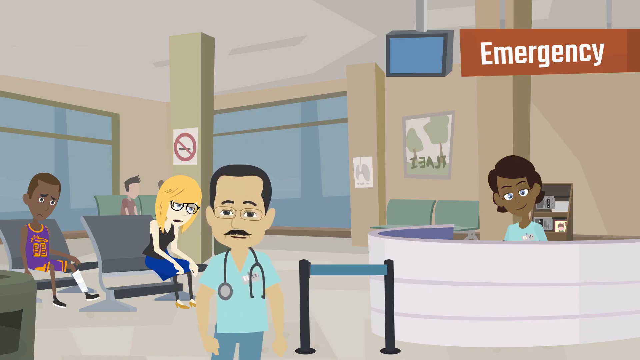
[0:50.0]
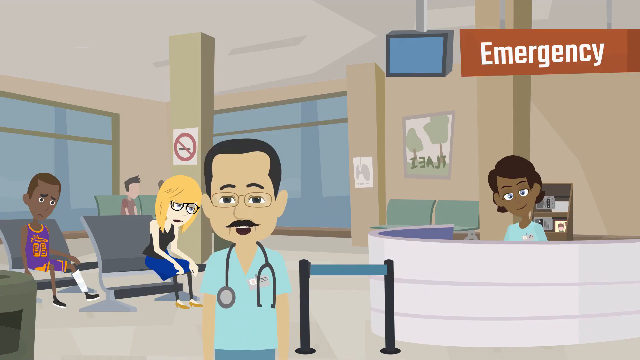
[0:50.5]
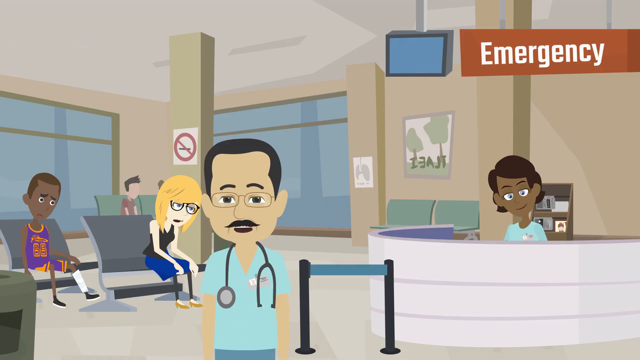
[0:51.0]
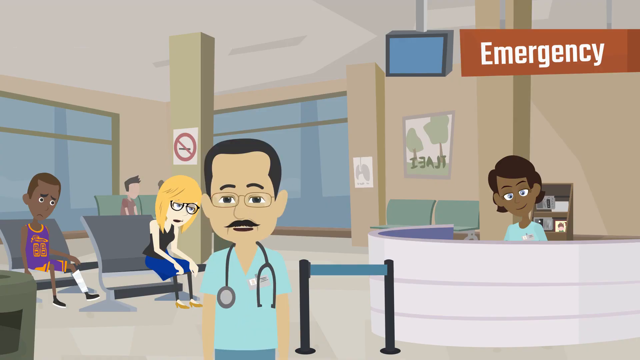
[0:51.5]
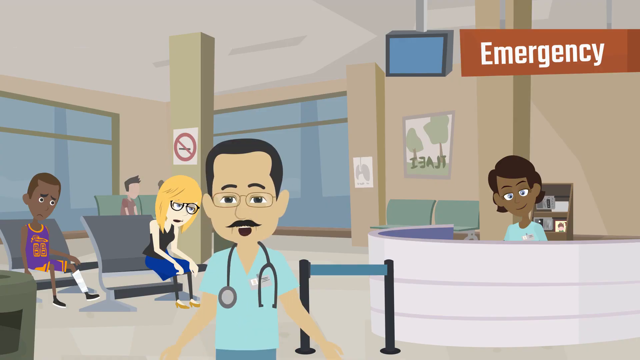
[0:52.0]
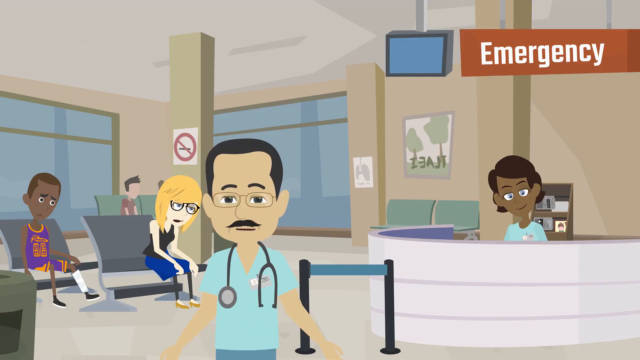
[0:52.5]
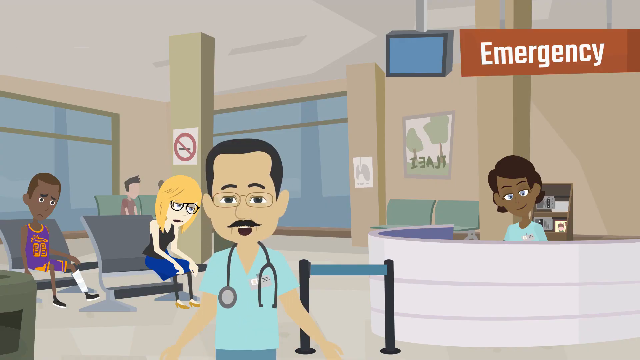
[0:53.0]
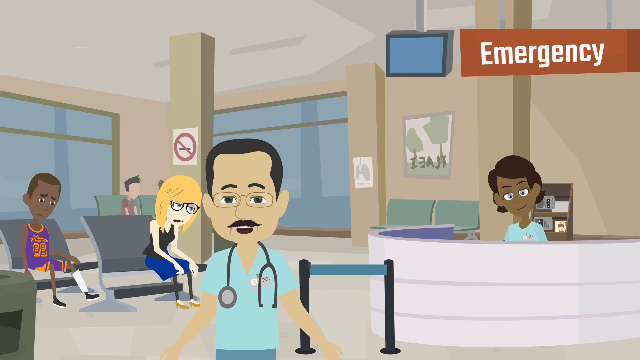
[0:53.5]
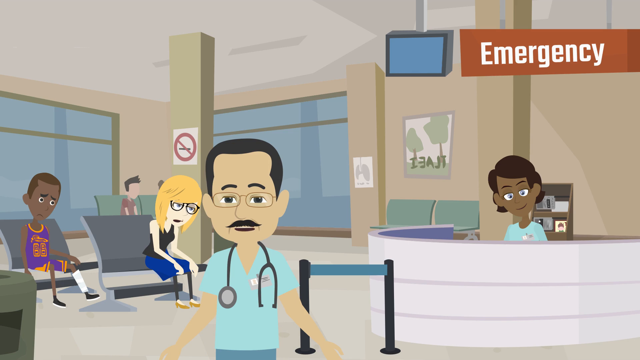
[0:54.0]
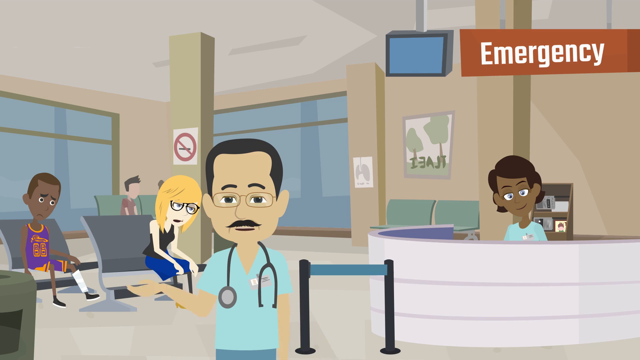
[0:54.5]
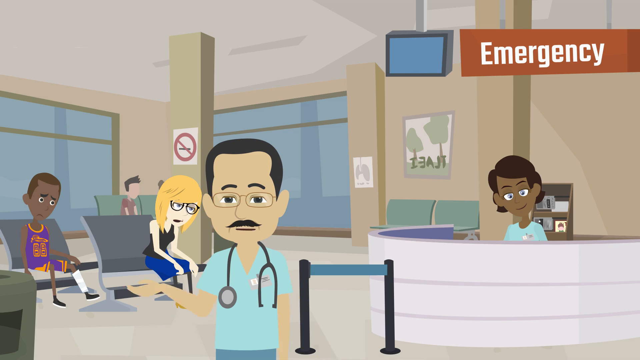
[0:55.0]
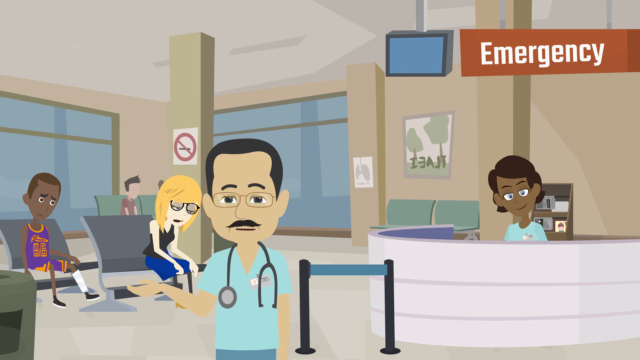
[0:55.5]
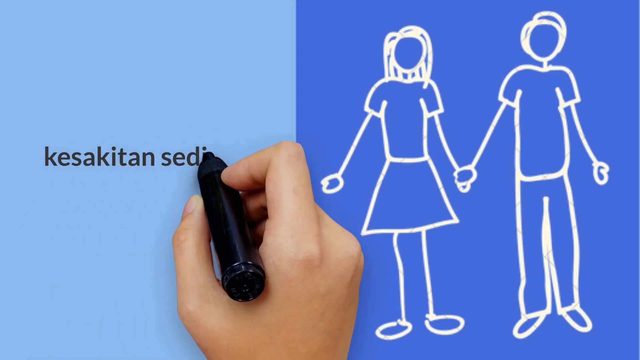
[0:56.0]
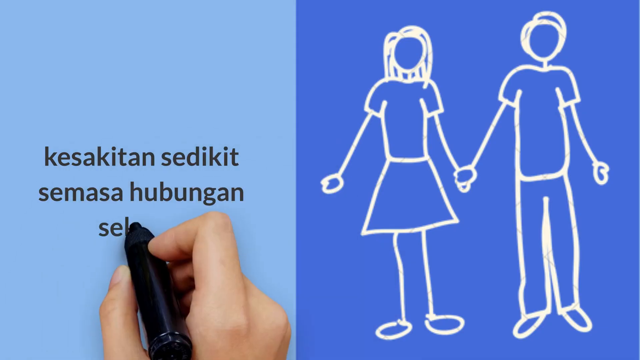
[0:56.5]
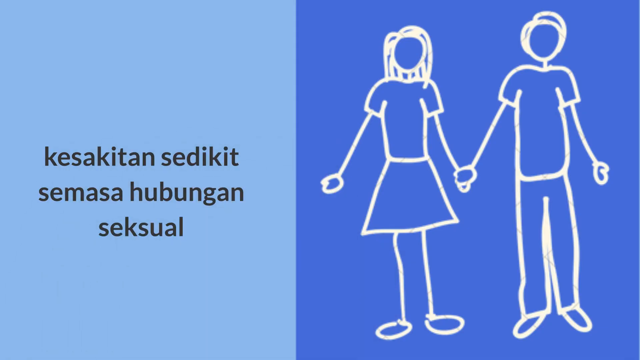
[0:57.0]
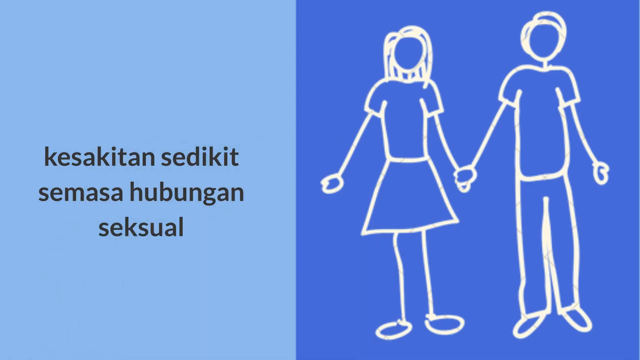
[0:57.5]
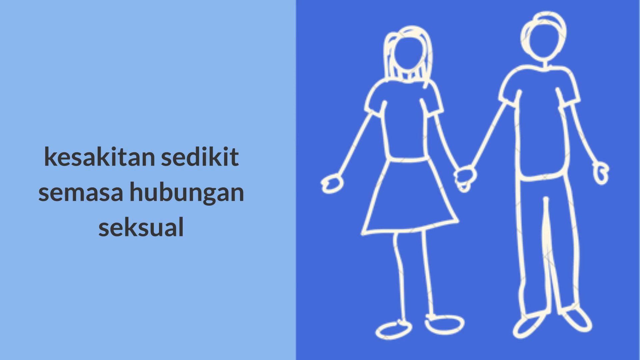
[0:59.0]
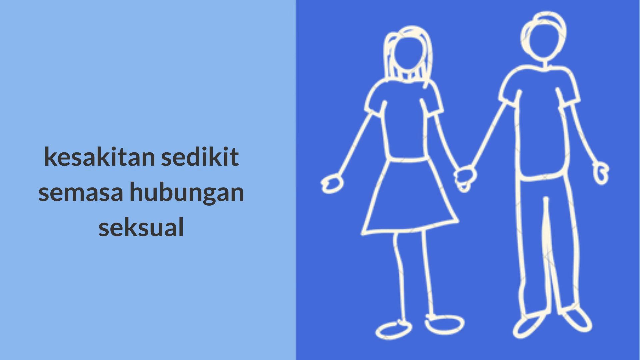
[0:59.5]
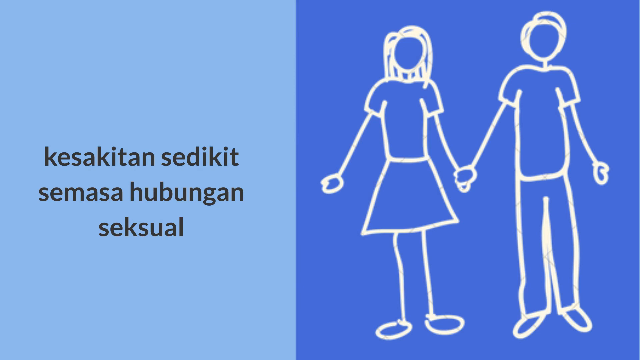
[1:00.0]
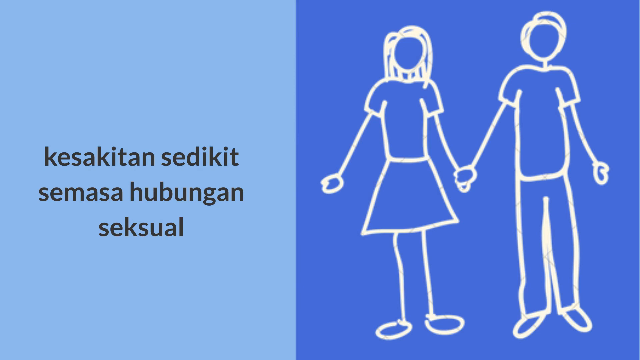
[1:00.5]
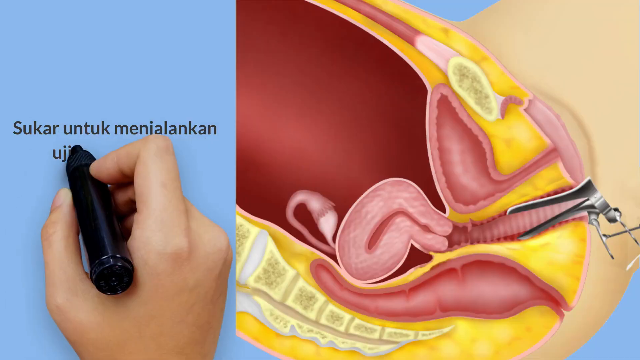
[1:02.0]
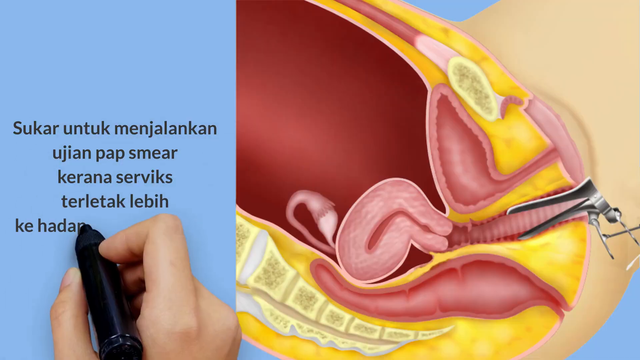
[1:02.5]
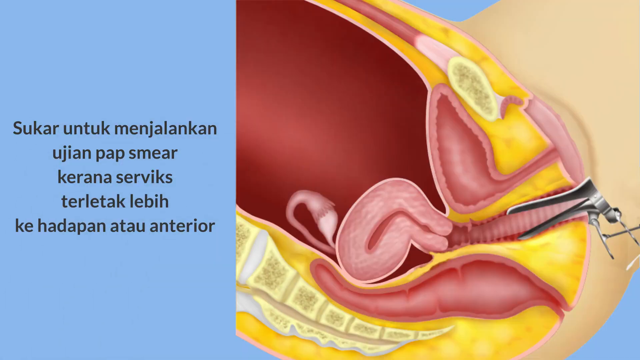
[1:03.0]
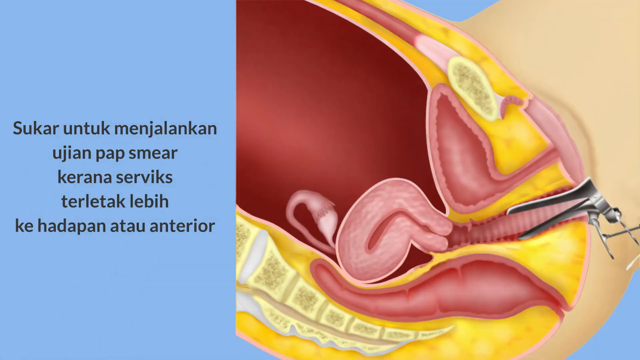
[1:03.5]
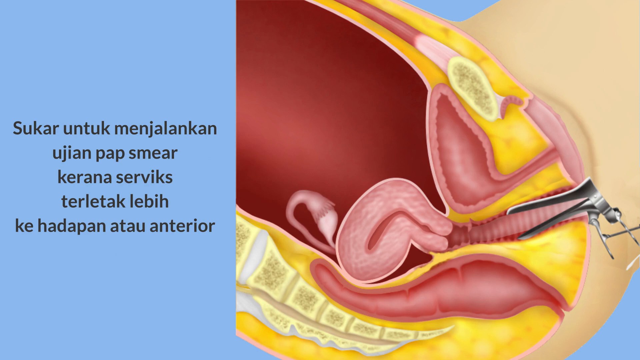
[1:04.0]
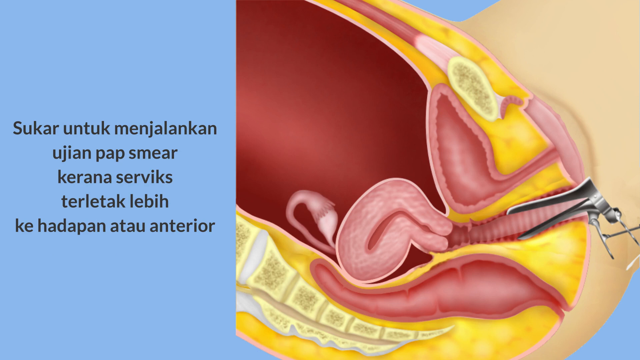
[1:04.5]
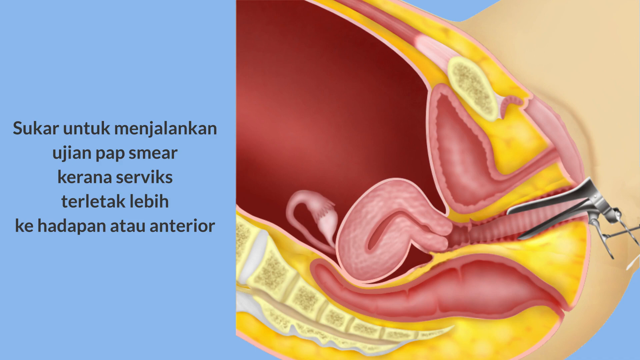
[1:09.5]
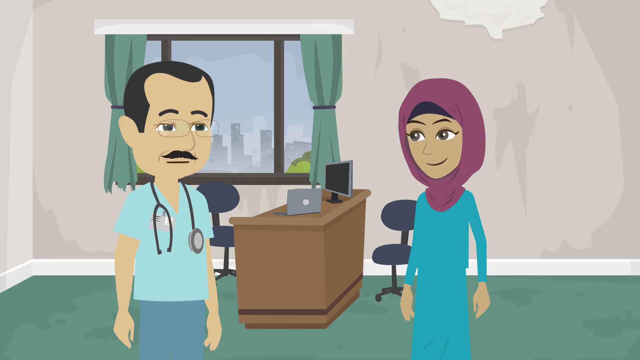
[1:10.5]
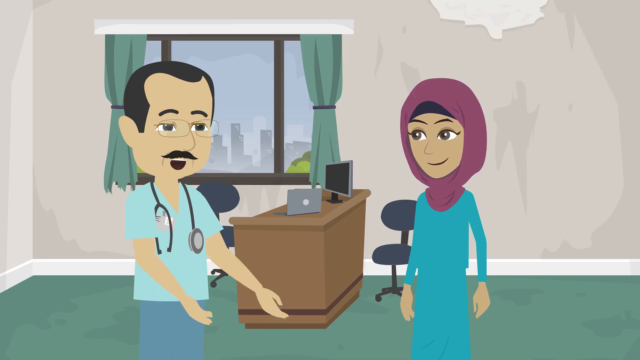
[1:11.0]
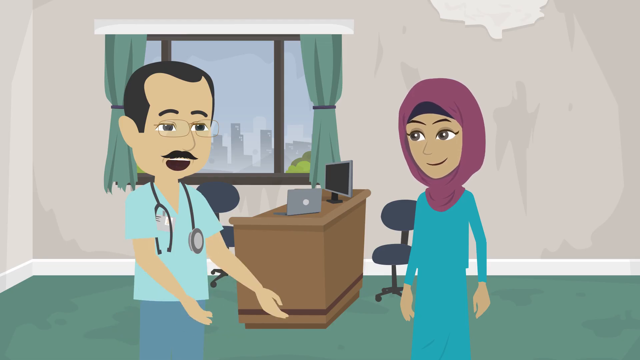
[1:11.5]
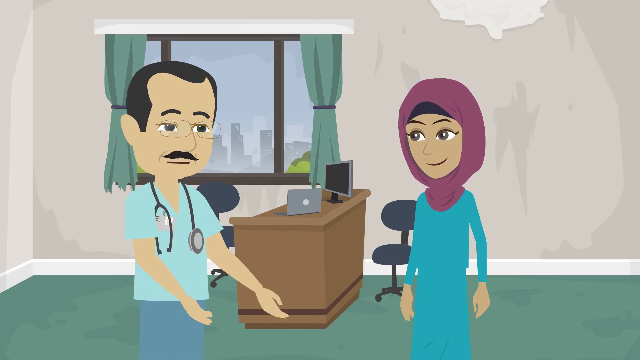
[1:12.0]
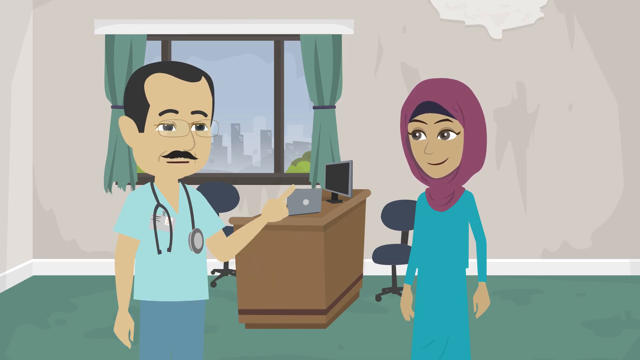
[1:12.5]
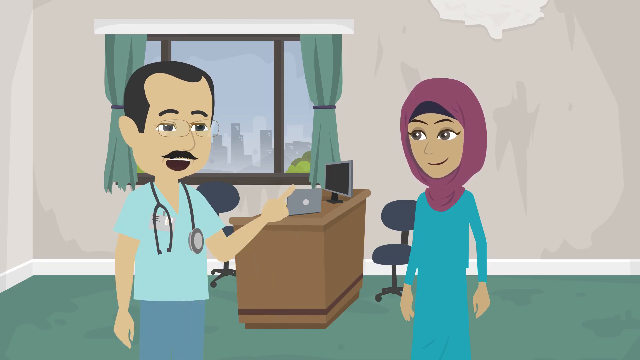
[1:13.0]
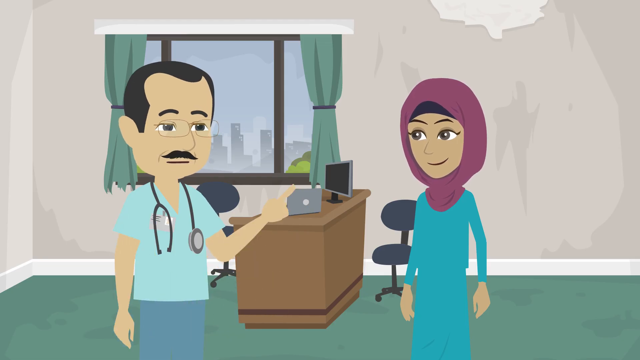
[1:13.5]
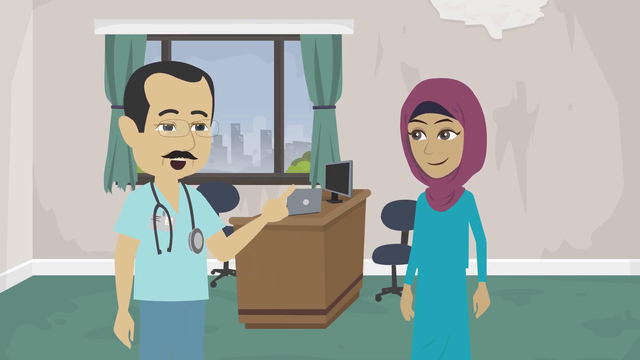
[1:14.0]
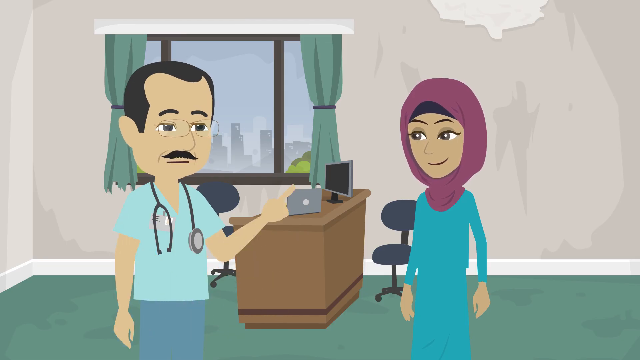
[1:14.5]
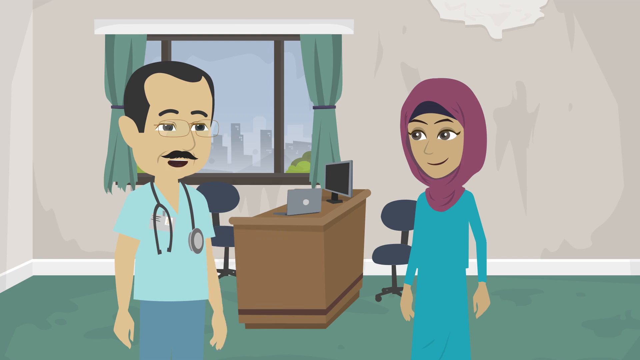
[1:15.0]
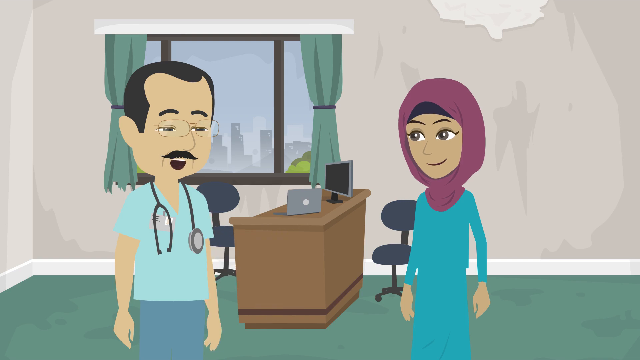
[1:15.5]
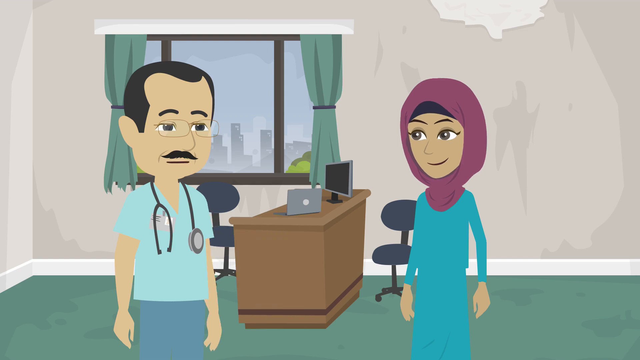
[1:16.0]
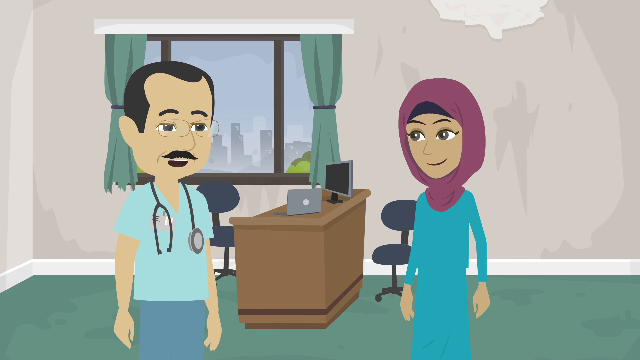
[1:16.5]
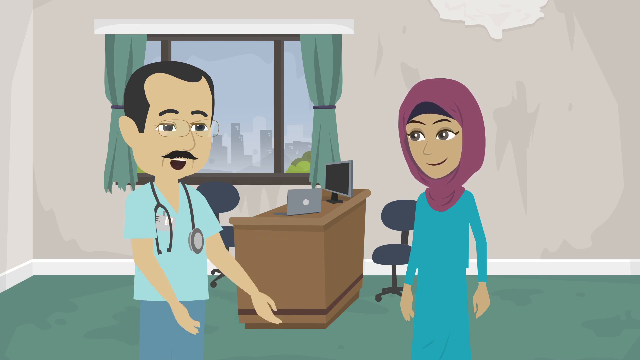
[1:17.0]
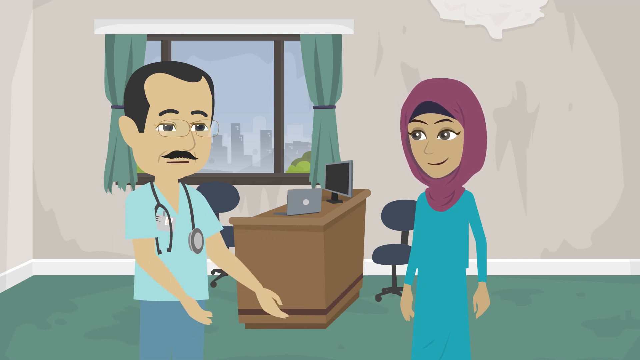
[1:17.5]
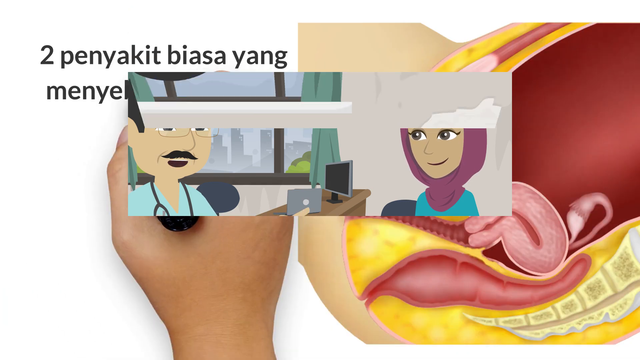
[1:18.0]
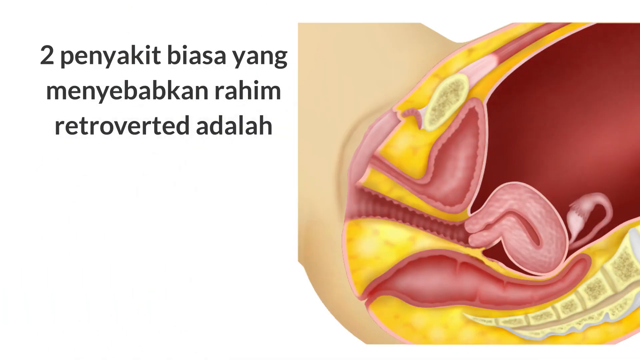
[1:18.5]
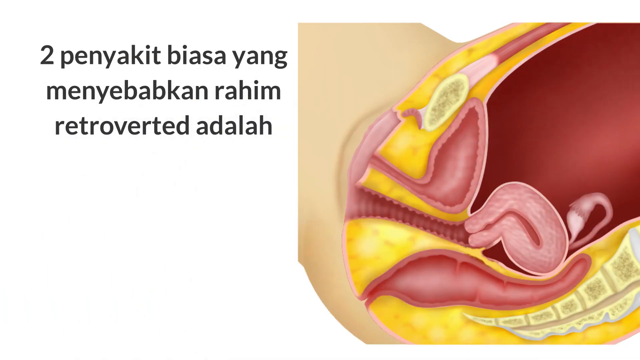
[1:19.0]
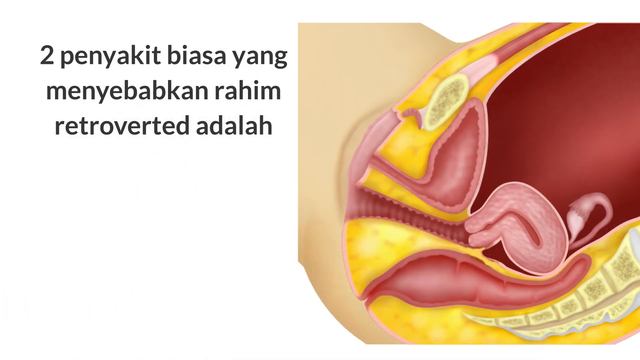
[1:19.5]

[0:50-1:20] The scene is back in the front area of the emergency room, where a red and white sign on the right says "emergency". A lady is at the desk, sick people are in the emergency room, and the doctor is speaking; he wears a stethoscope and scrubs and has dark hair. A new screen shows dark blue on the right and light blue on the left. On the right, a man and a woman, drawn like stick characters, hold hands, and on the left there is black writing. Another screen shows a uterus with what looks like some sort of pap smear, with the uterus sort of lying down and the pap smear going into it. On the left is blue with sort of gray writing, in which the words "pap smear" are recognizable. The doctor then talks to the lady in an office, and the screen changes to a picture of a uterus with words to the left.